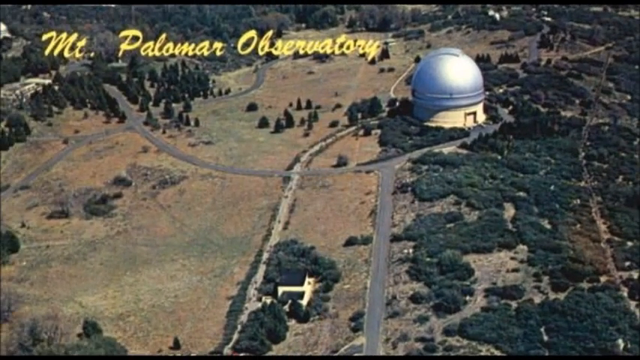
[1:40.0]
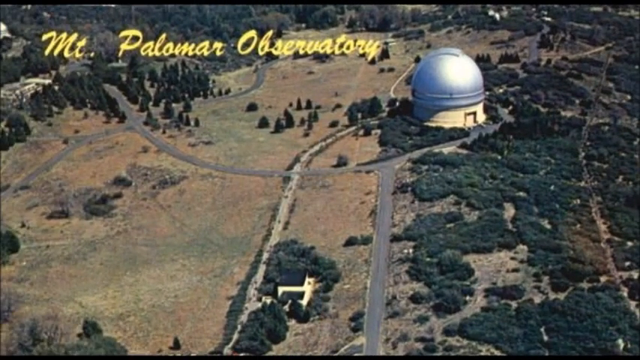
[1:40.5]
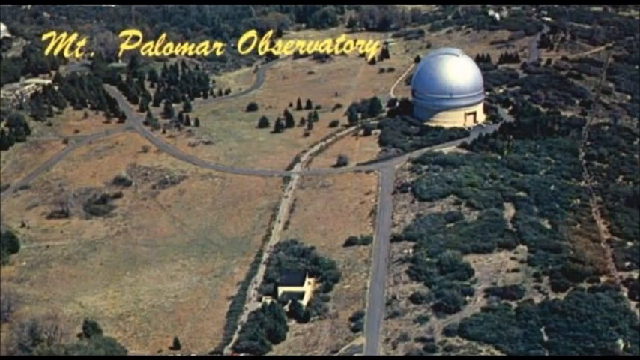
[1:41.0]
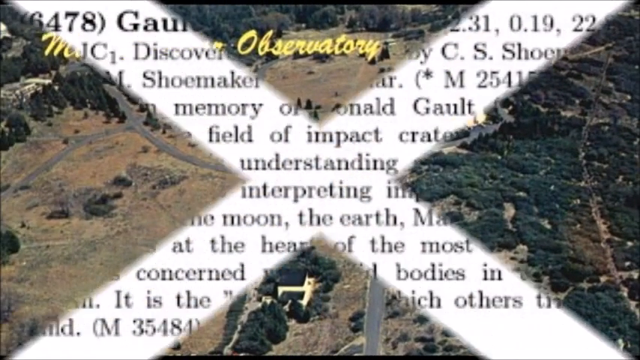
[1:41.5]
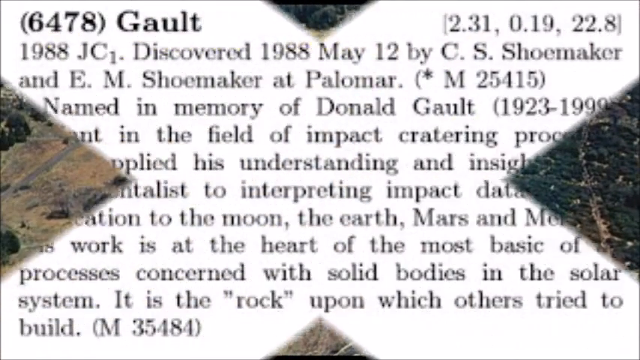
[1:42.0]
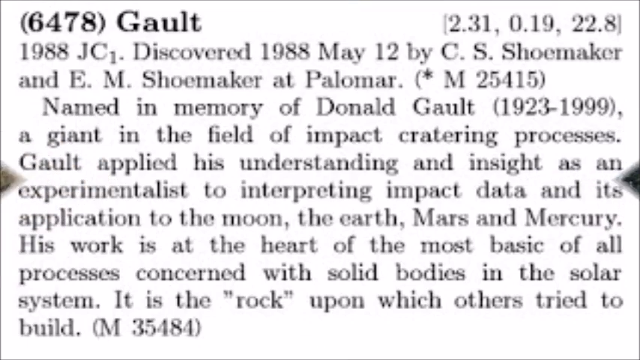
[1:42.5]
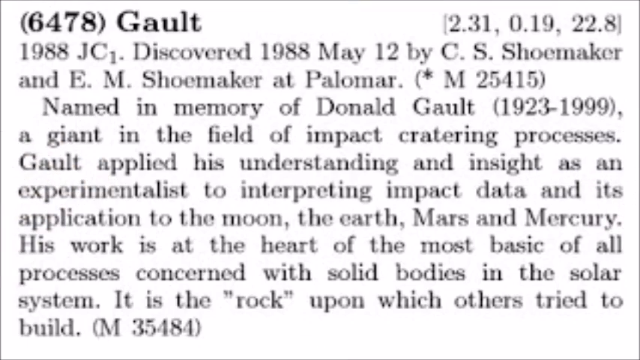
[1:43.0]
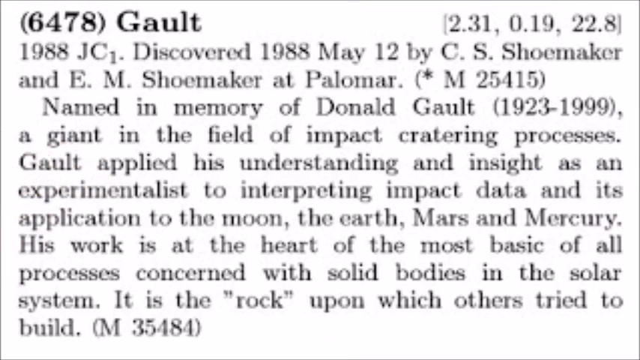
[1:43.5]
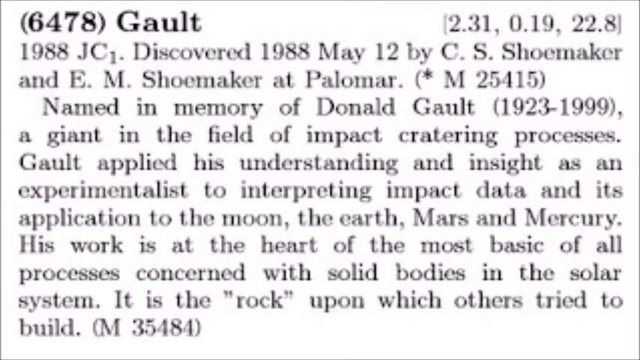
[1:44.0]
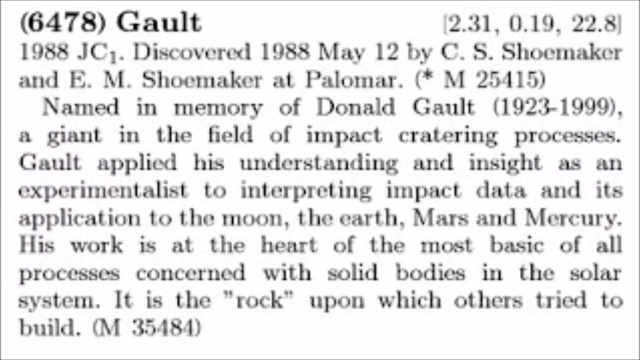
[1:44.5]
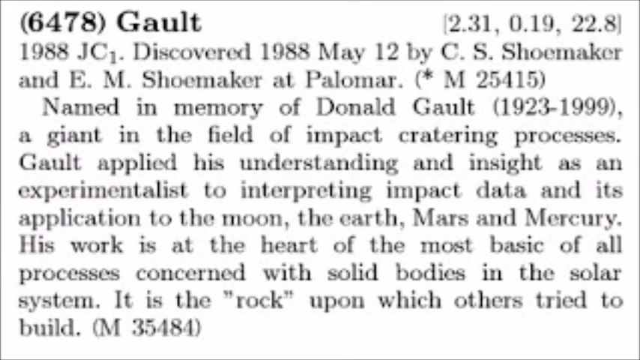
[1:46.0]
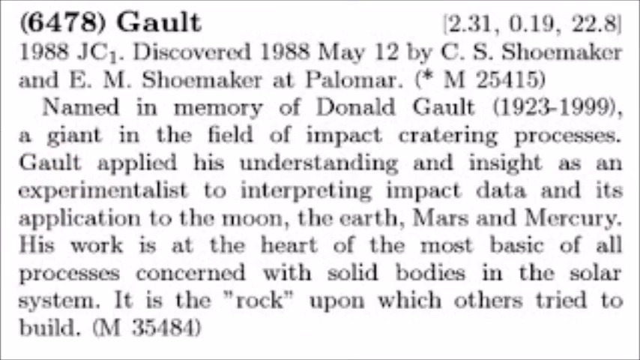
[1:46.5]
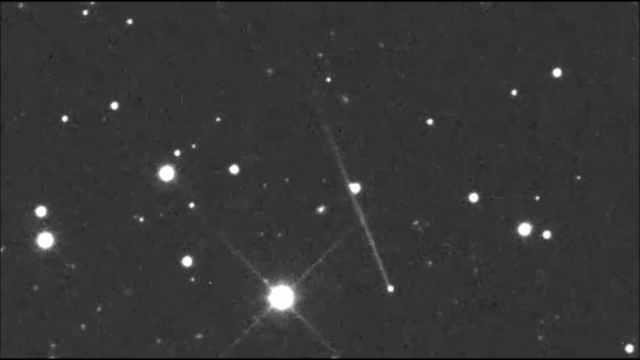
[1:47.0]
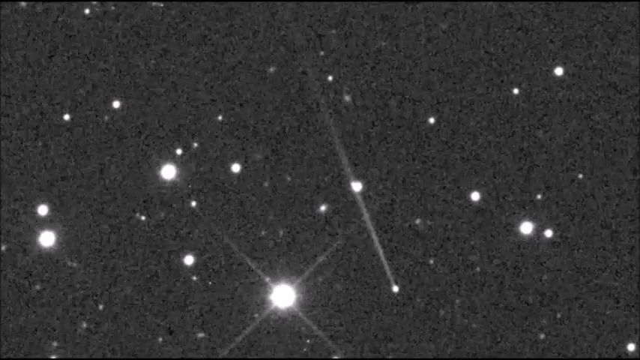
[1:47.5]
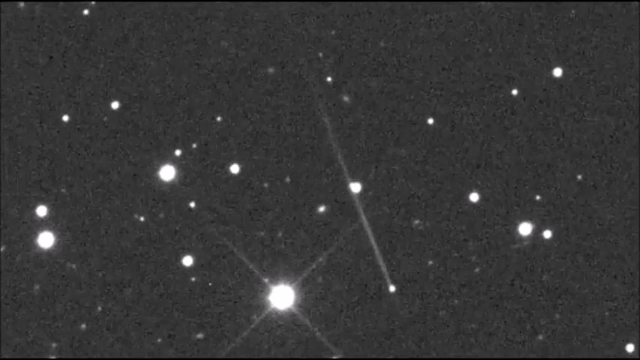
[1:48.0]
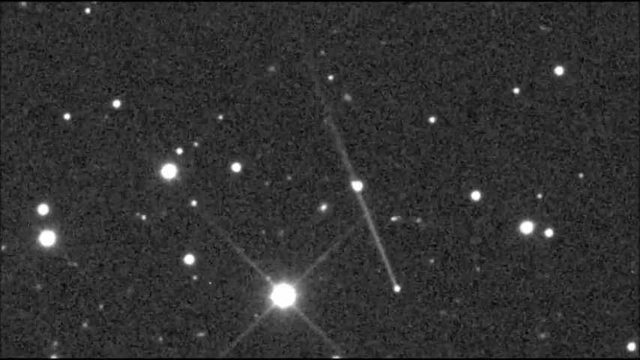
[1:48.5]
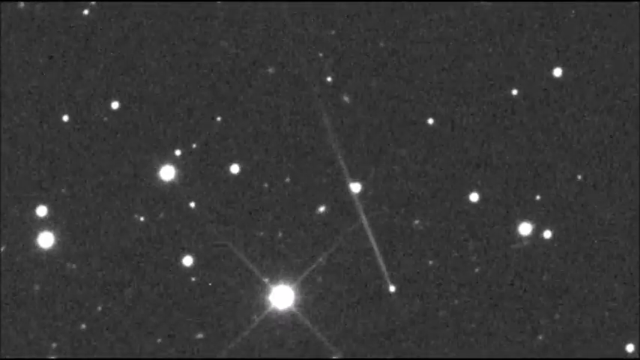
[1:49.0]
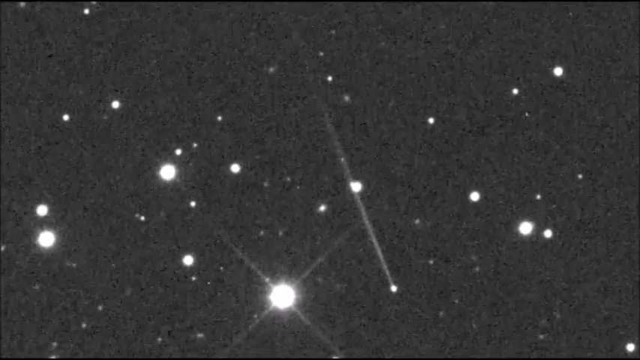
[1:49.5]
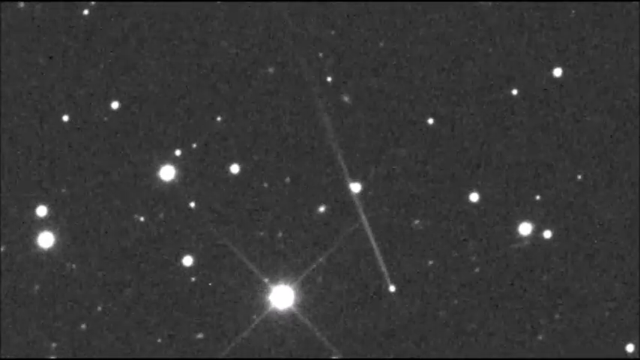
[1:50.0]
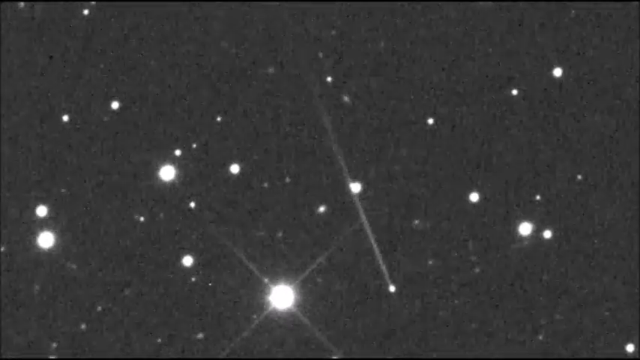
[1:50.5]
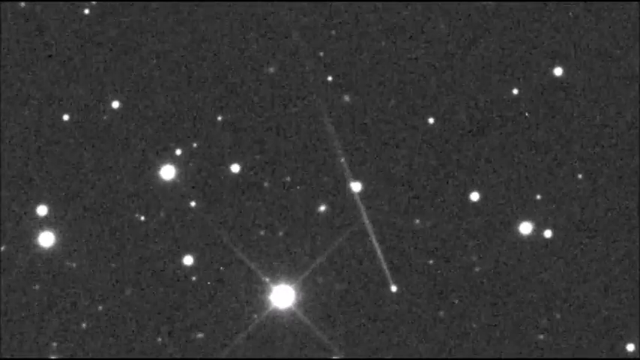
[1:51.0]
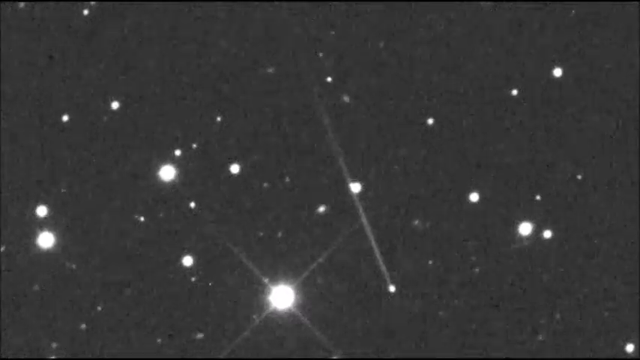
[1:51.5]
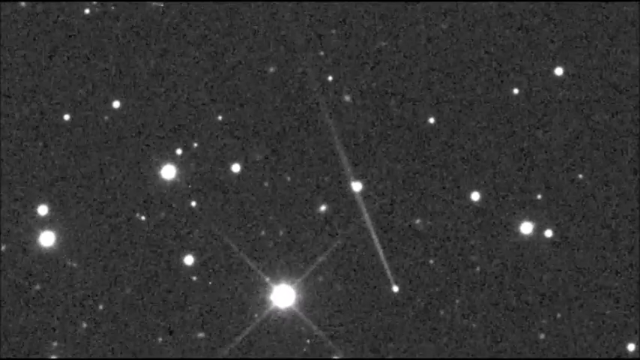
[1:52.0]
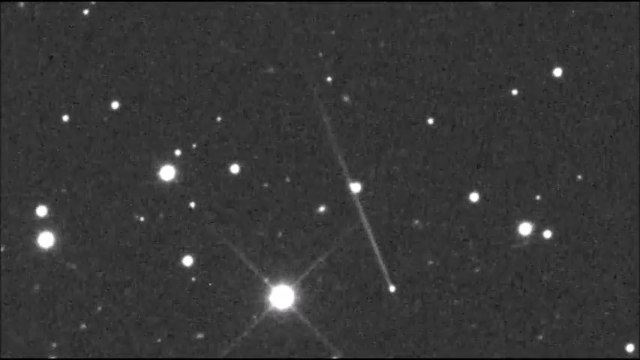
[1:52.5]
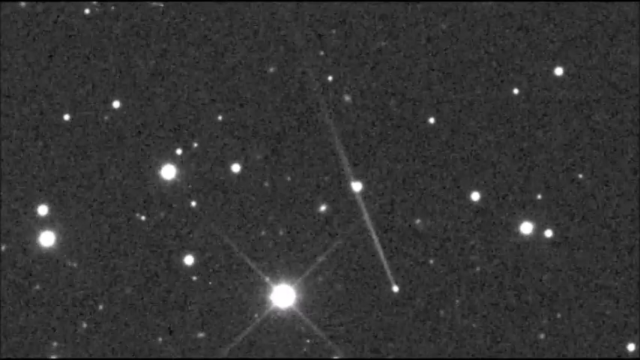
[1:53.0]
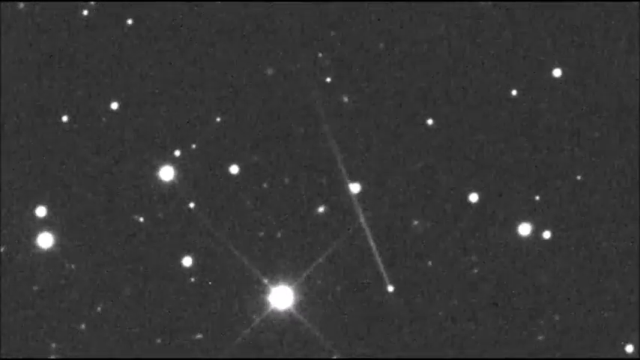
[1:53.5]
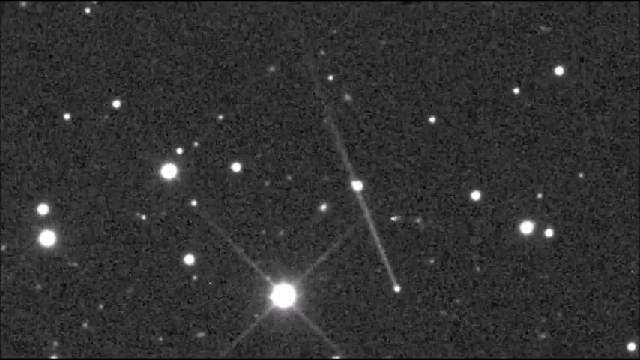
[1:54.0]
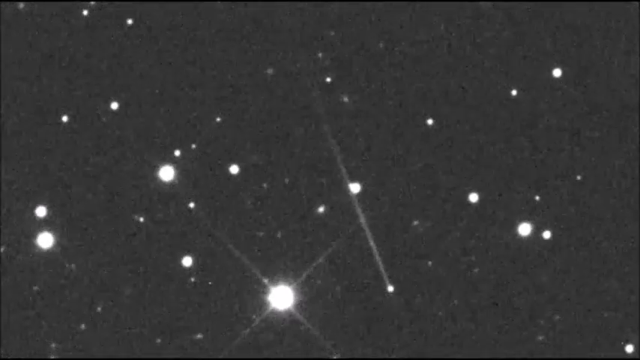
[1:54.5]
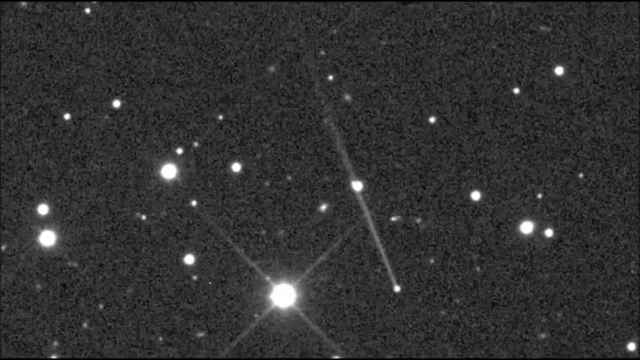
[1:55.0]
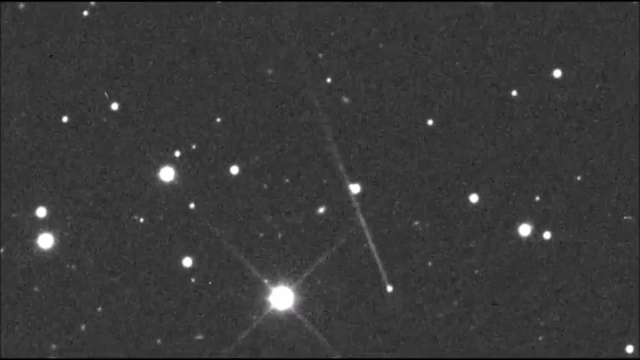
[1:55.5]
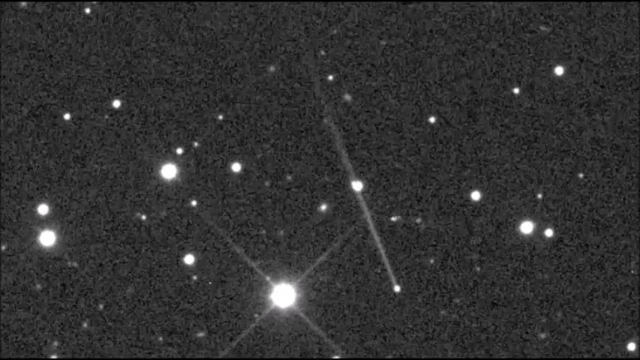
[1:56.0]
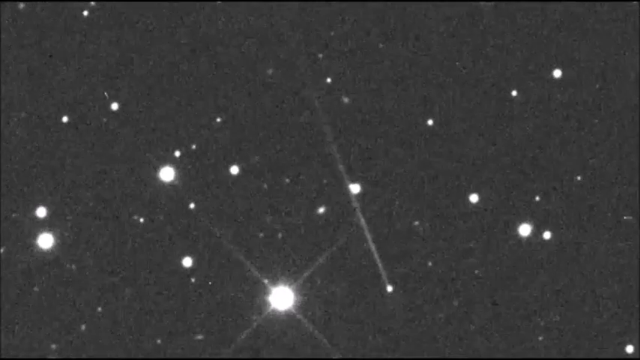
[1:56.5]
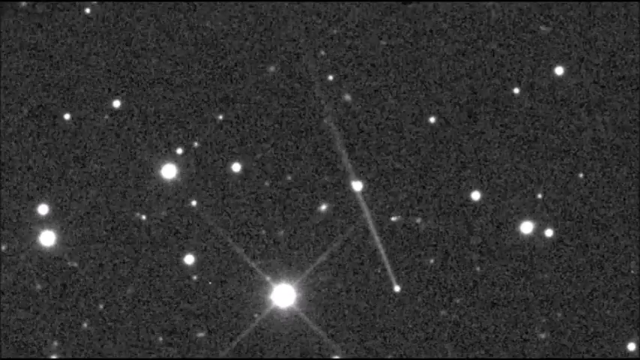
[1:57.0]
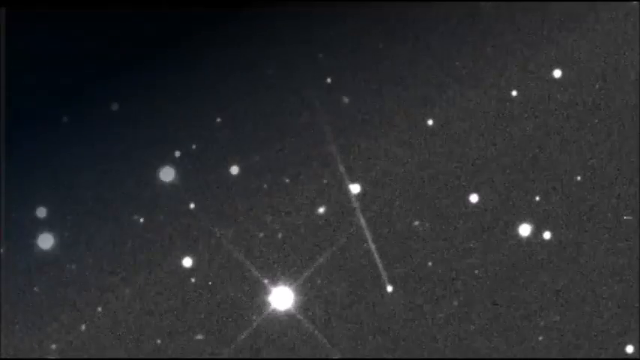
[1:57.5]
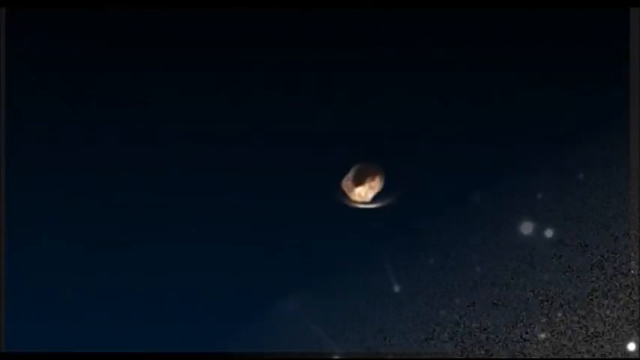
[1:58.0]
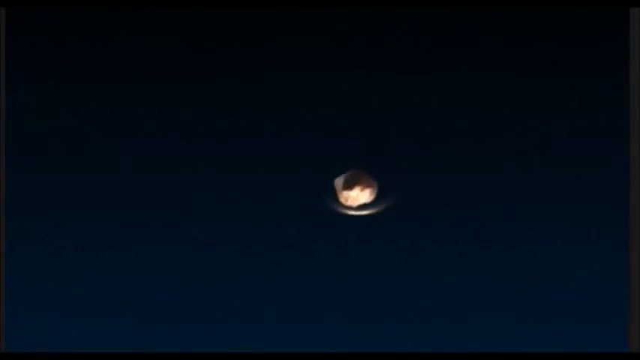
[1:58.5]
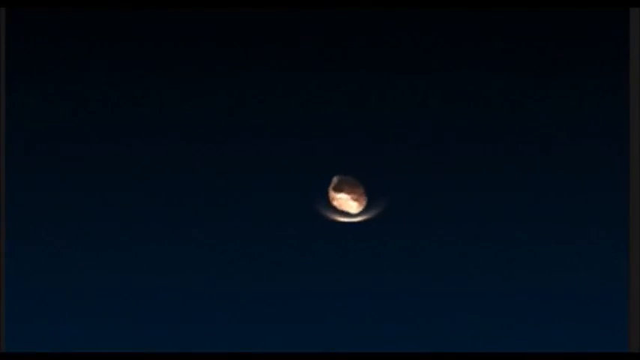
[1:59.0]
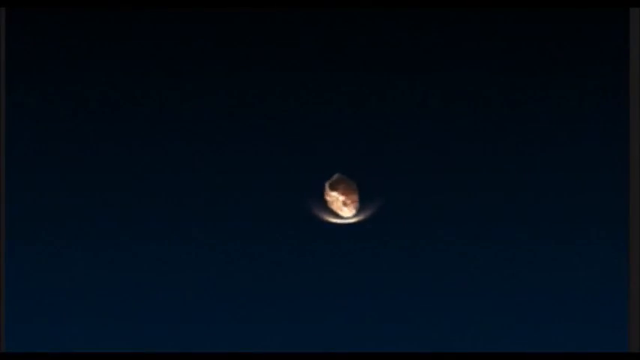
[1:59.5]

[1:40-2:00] In a right swipe, the right side folds in over the left to reveal a view over an area of land, with trees across the top and down the right side, grass, and other trees. A road comes from the top left down to the middle, angling about two-thirds of the way across, and there is a small observatory with a silver rounded top covering about half of it and a white bottom part. Two other roads come up from the bottom and connect to this road. In the top left corner, yellow text says "Mount Polymer Observatory." An X wipe leads to a white background with bold text in the top left corner reading "6478" and then "Galt," with information underneath: it was discovered 1988 May 12th by CS Shoemaker and EM Shoemaker at Polymer, followed by a whole paragraph covering the rest of the page. Next is a black and white image with white stars and the asteroid swaying slightly back and forth, maybe a quarter of an inch, and each time it sways the screen looks somewhat staticky. It cuts to a dark blue background with a circular brown object in the center that has a small brown ring around its front. The object moves back and forth, and the view closes in on it a little.